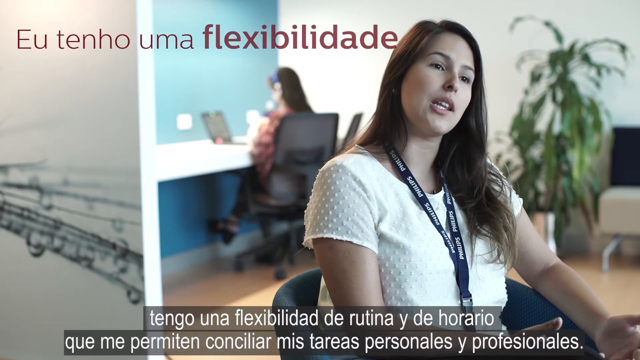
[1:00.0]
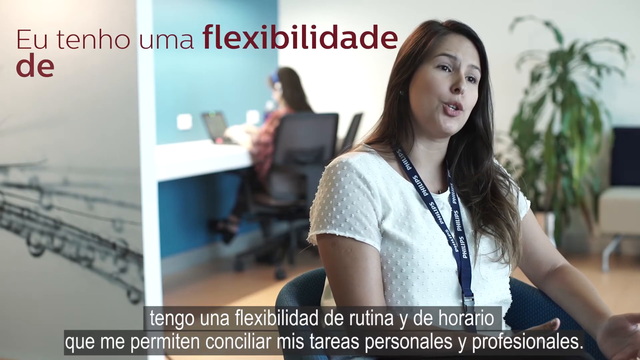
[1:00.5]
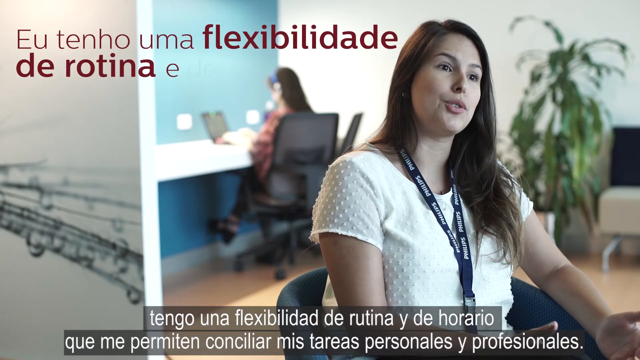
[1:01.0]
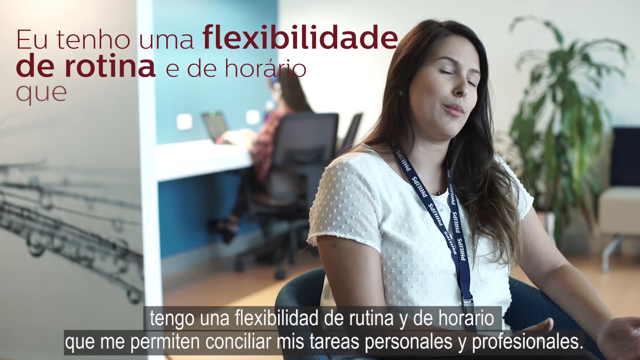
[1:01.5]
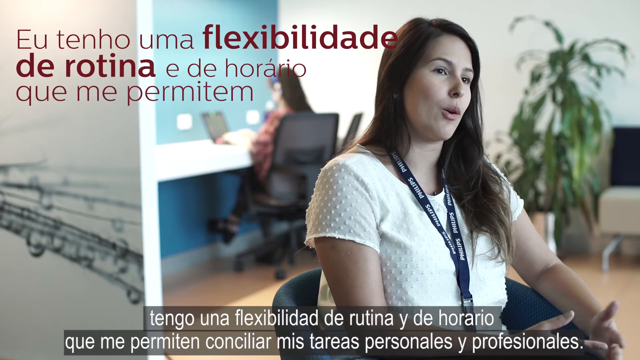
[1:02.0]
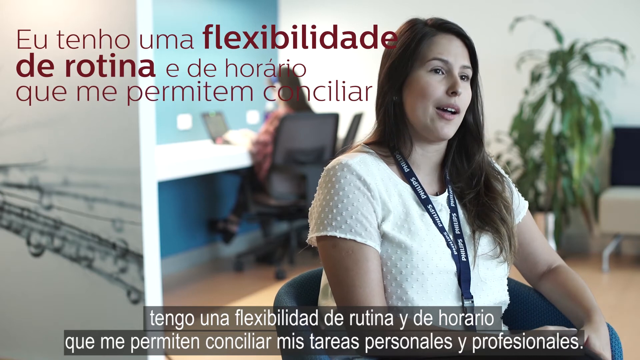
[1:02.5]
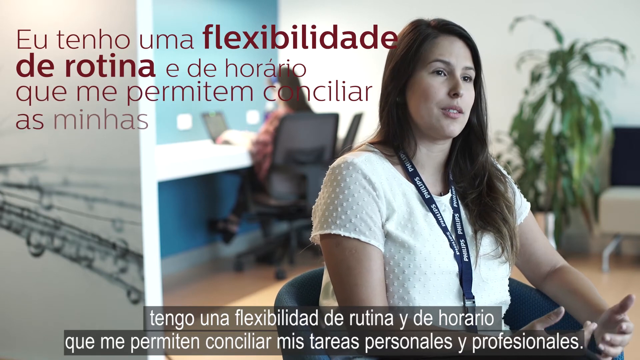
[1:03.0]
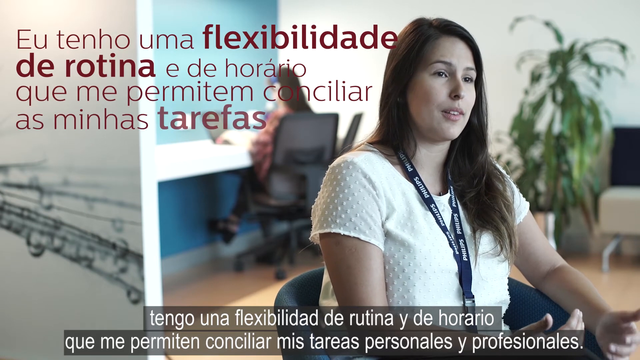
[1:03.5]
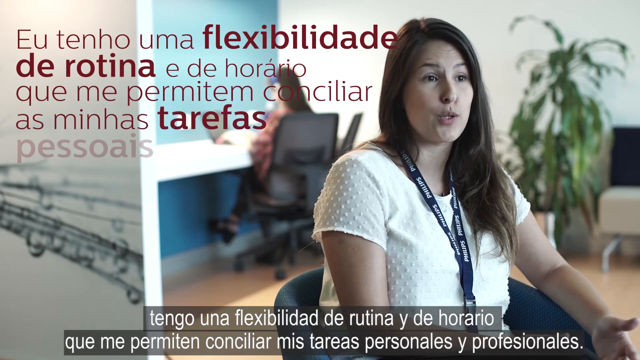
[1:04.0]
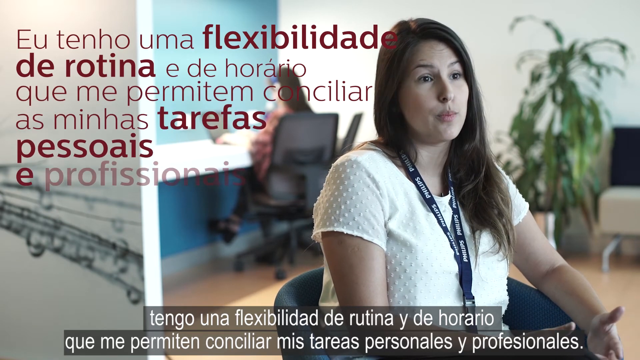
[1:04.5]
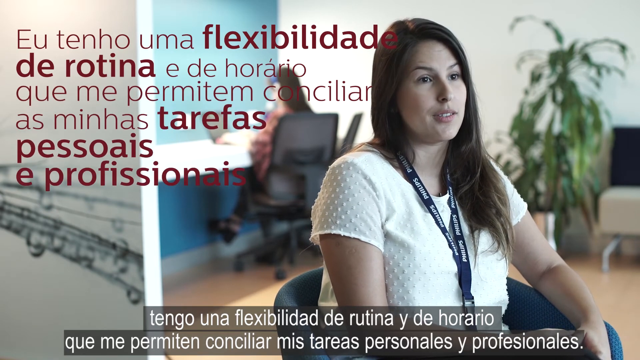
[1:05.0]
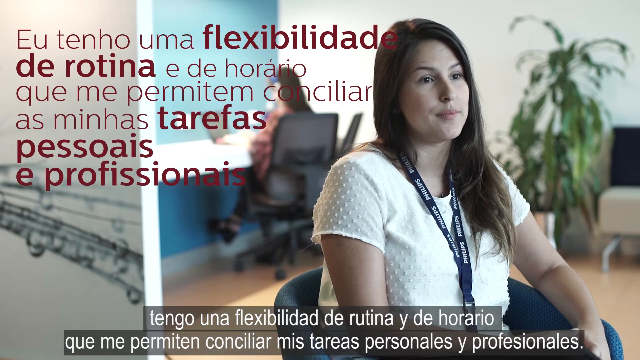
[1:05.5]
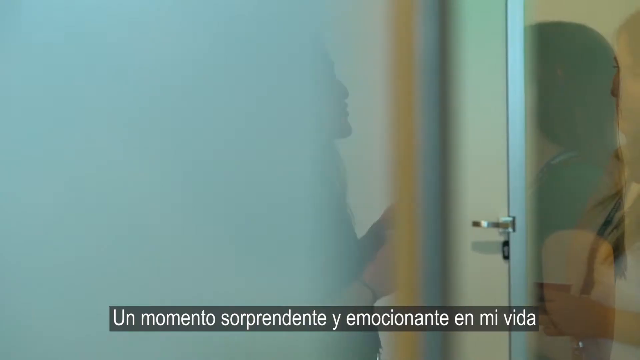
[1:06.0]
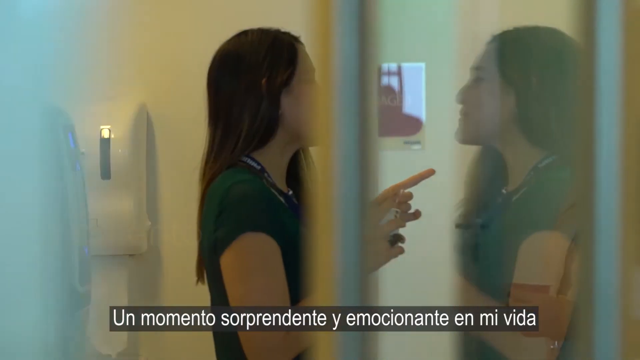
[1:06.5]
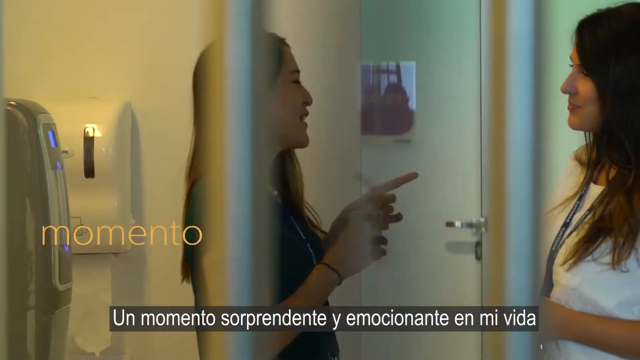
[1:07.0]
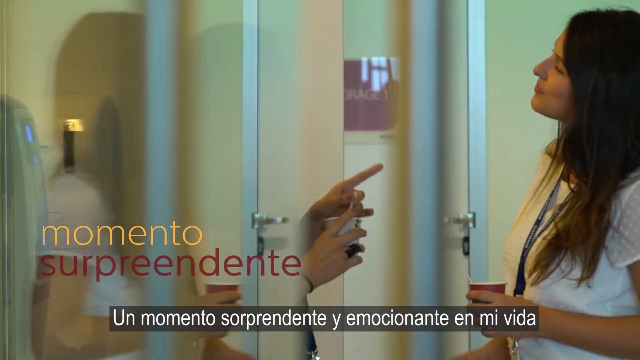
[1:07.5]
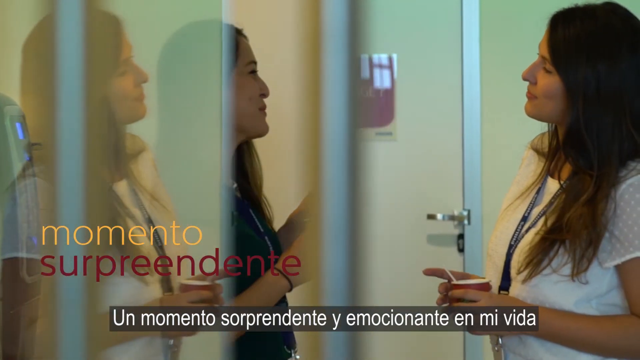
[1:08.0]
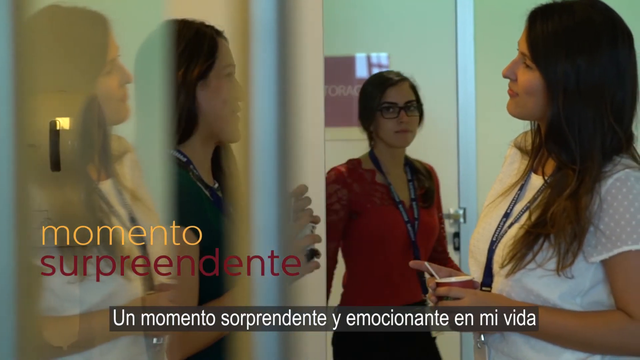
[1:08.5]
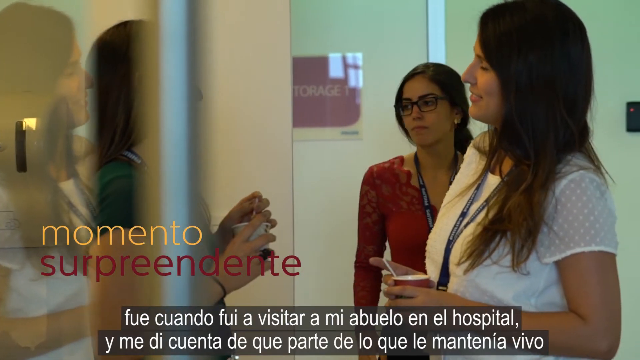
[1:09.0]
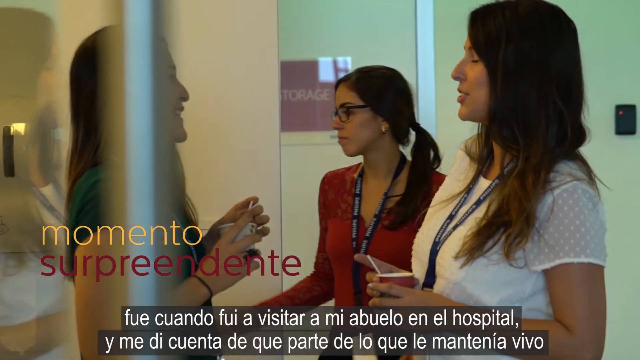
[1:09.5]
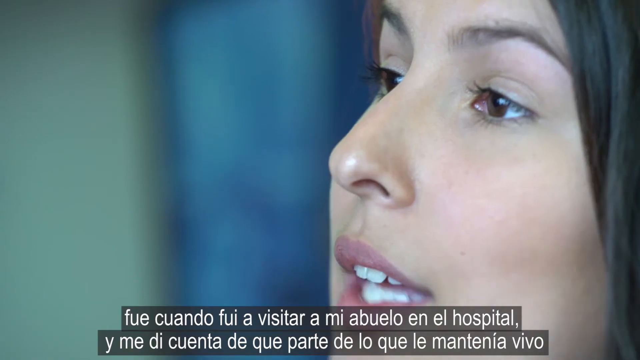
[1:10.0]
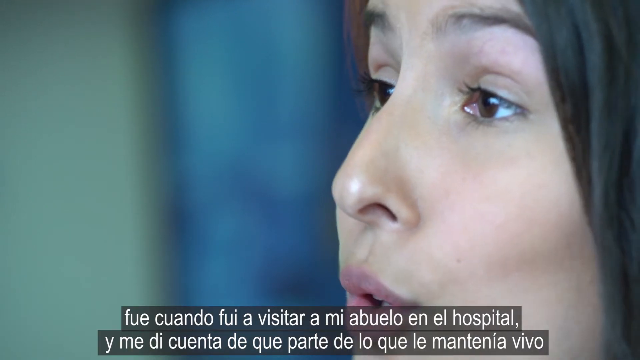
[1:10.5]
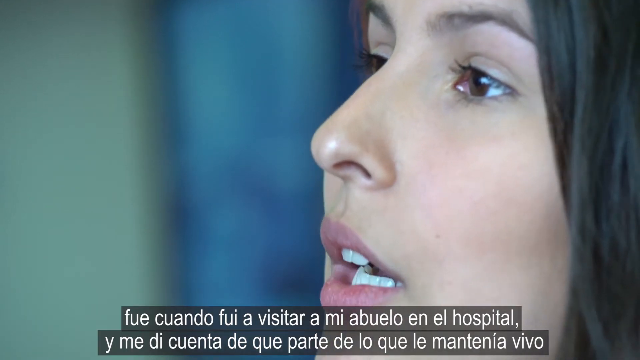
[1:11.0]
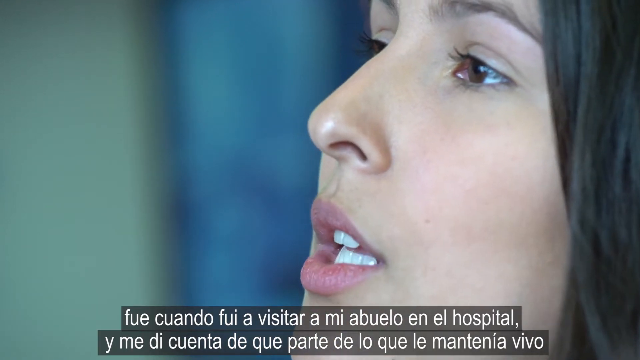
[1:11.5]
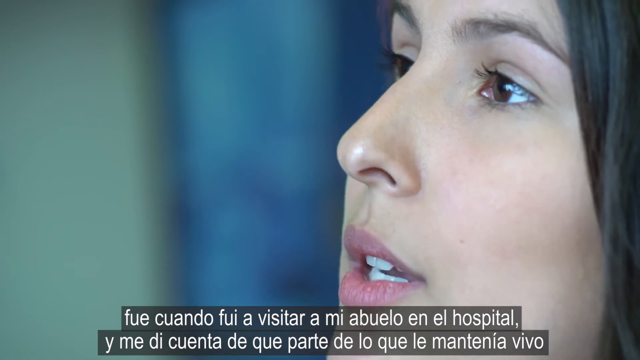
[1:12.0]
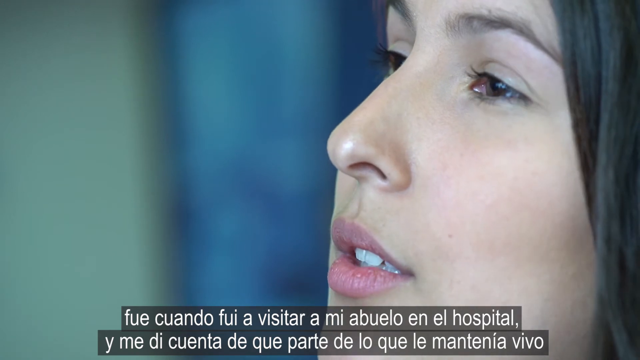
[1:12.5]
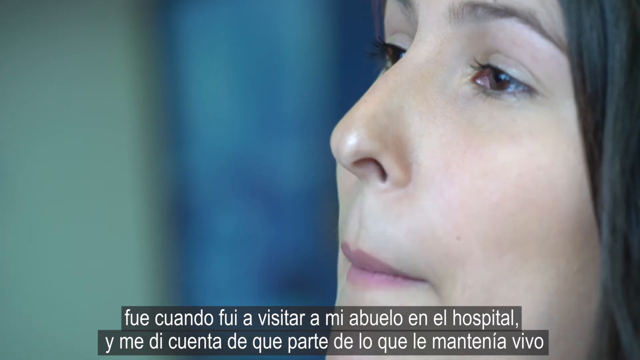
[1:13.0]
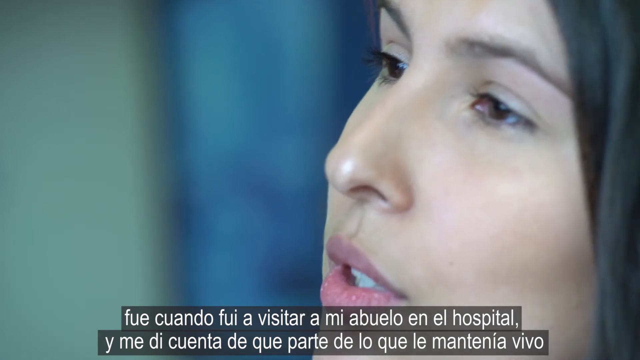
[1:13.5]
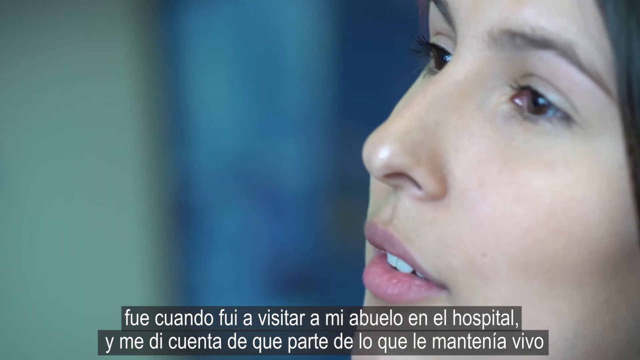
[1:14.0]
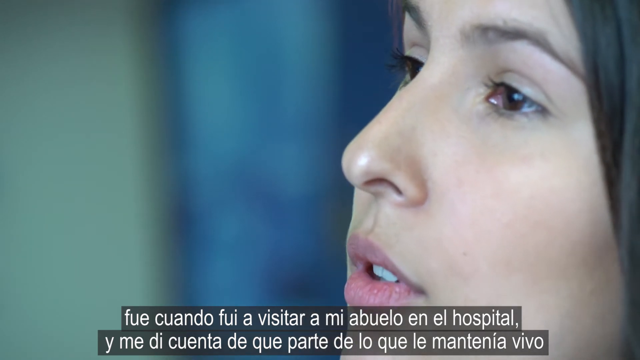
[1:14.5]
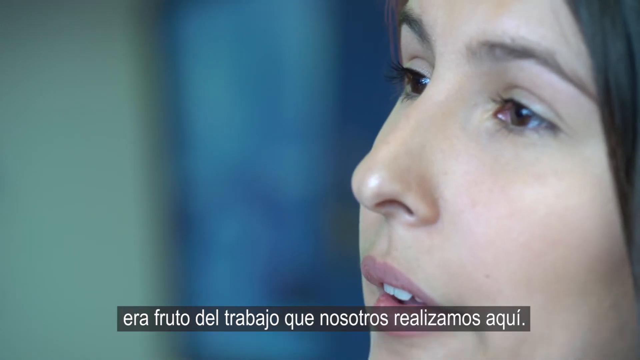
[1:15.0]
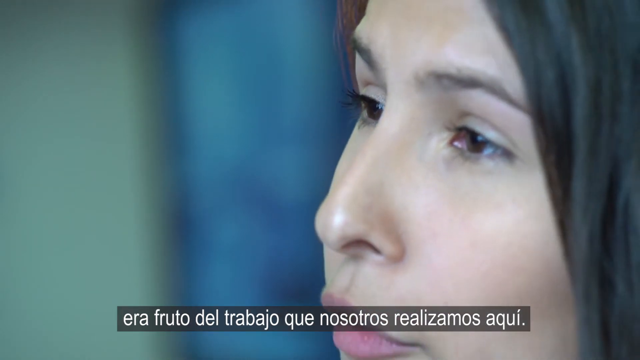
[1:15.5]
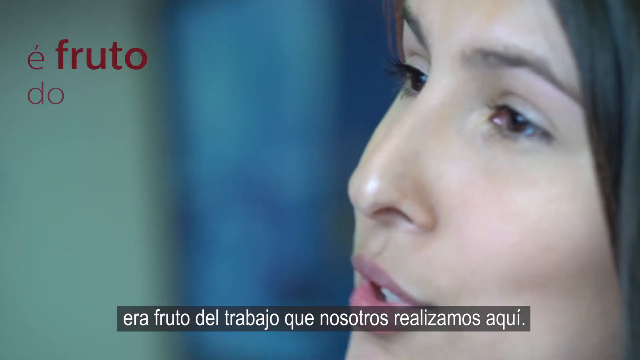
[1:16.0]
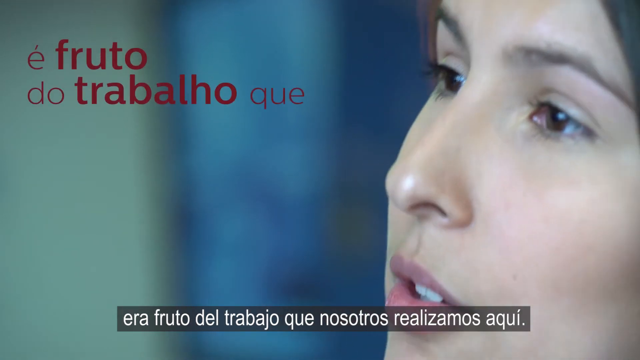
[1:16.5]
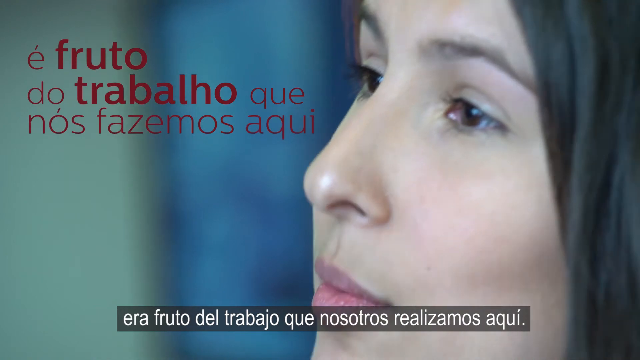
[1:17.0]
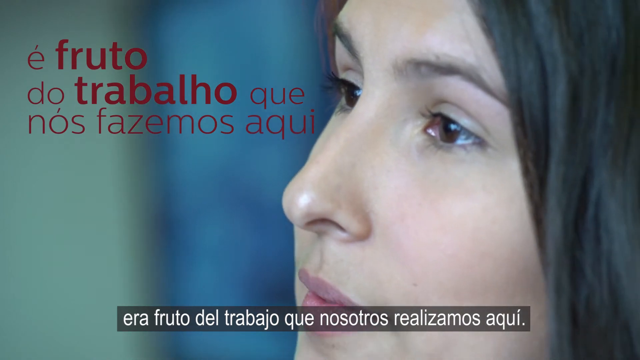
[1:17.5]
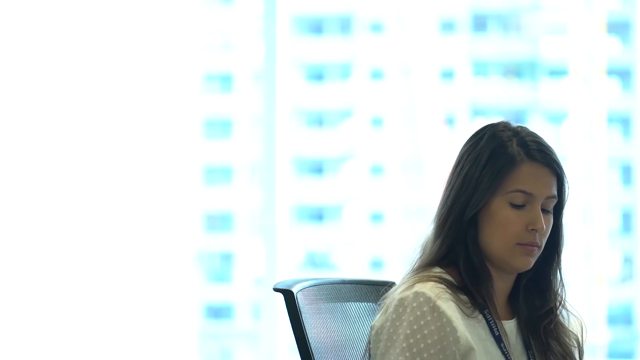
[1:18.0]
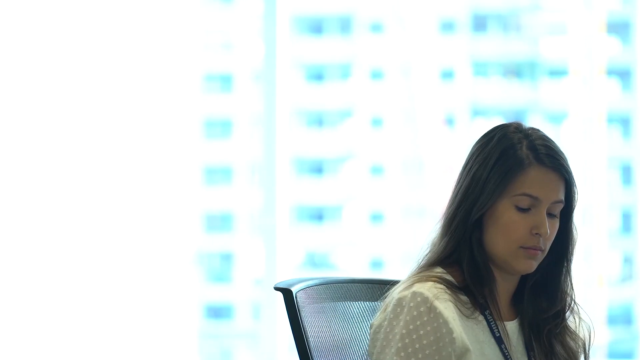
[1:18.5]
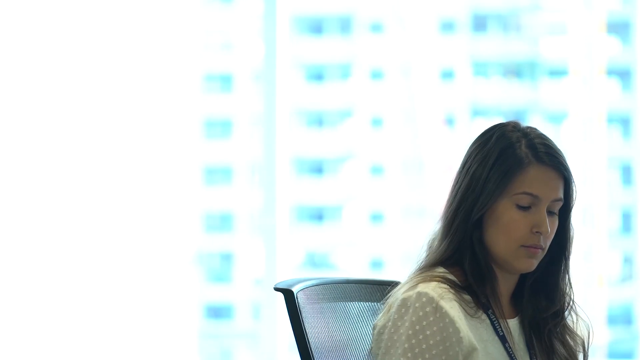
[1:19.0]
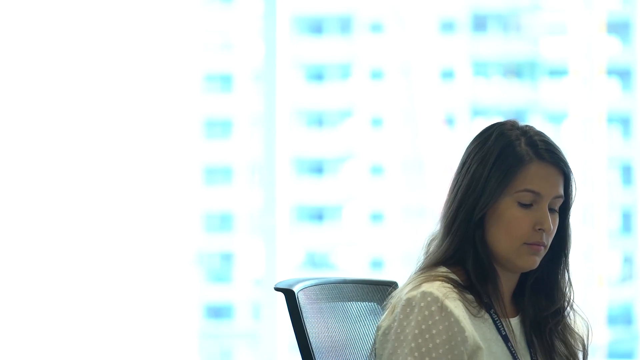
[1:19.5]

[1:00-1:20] Anna sits in a chair facing the camera; behind her is the woman working on the laptop against the blue wall in front of the white countertop. In the upper left section of the screen, the words "Eu tenho uma flexibilidade de rotina e de horario que me permitem conciliar as minhas tarefas pessoais e profissionais" appear. Two women then speak to one another: a woman with long dark hair, a green shirt, and a Philips band around her neck points two fingers toward Anna, and the words "momento surpreendente" appear on the screen. Anna tilts her head slightly to the left, listening intently. Both women hold small cups, the woman on the left a white cup and Anna a small red cup. A woman in a red dress, with a blue Philips band, dark hair pulled back, dark eyebrows, and dark glasses, walks through a glass door toward the two women and turns to the right. The shot changes to a close-up of Anna speaking, and the words "e fruto do trabalho que nos fazemos aqui" appear in the upper left of the screen.